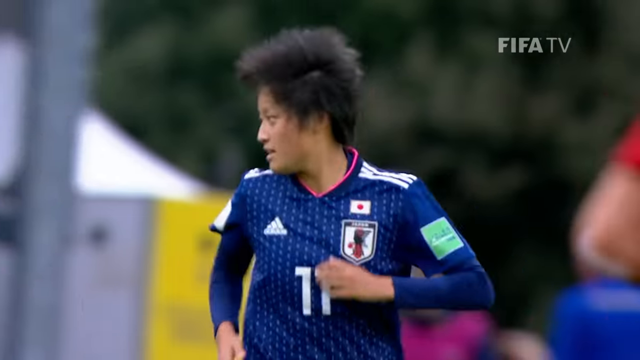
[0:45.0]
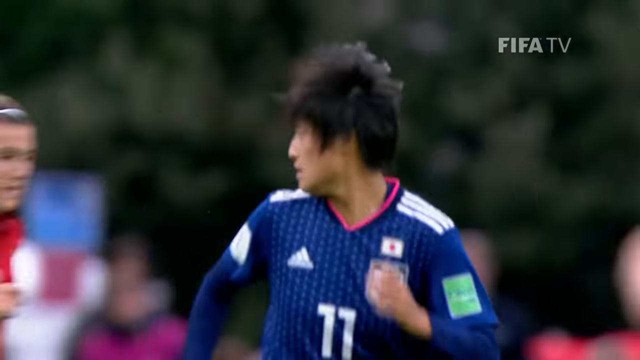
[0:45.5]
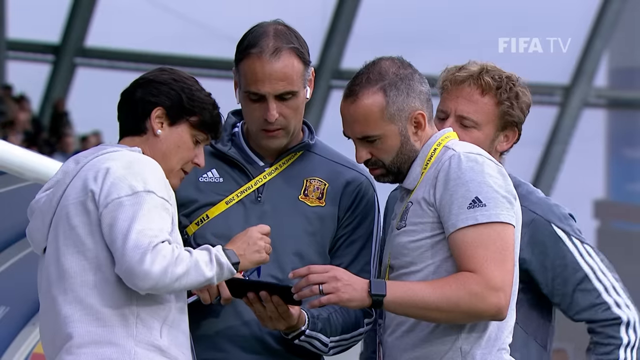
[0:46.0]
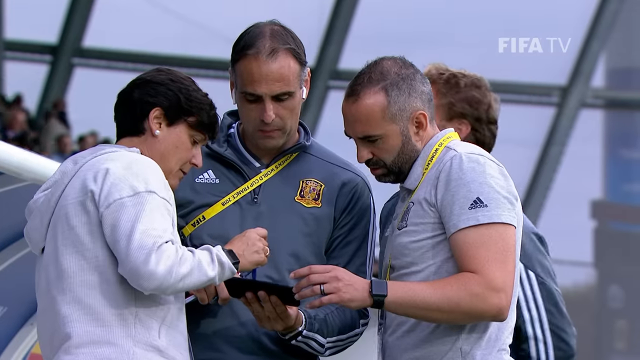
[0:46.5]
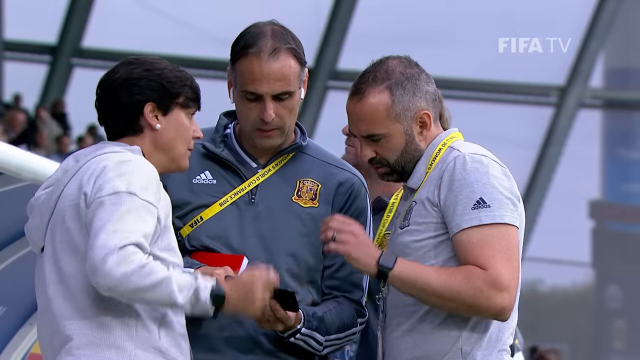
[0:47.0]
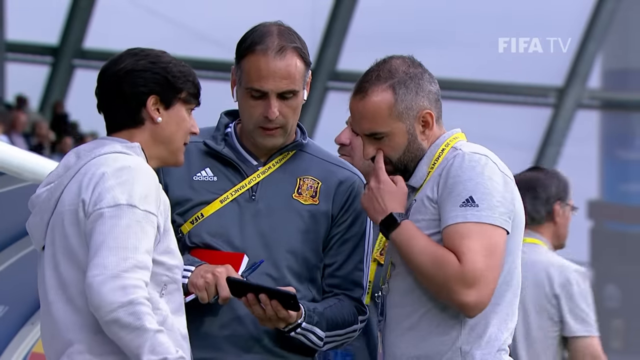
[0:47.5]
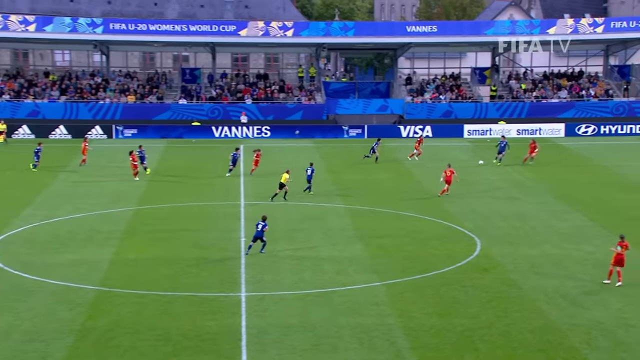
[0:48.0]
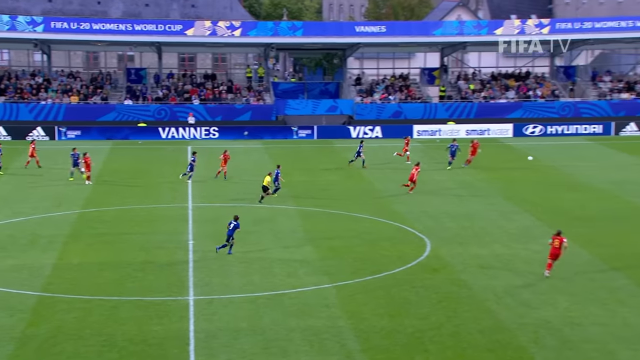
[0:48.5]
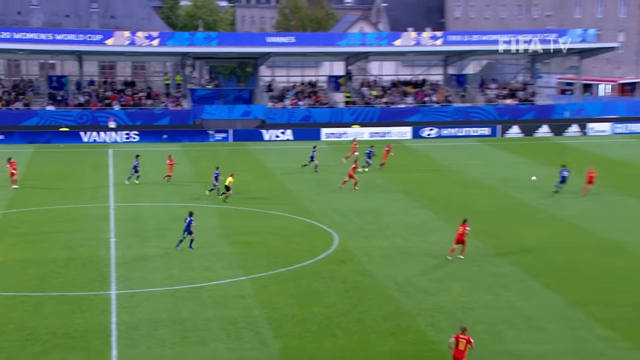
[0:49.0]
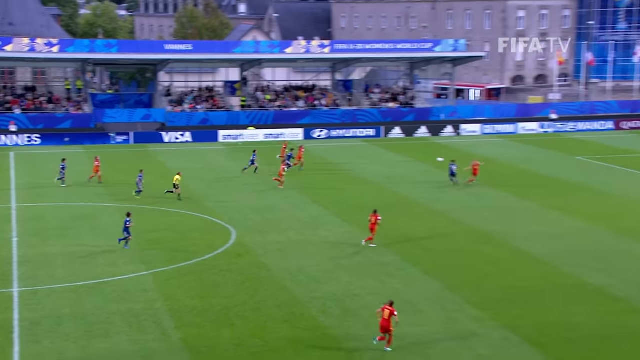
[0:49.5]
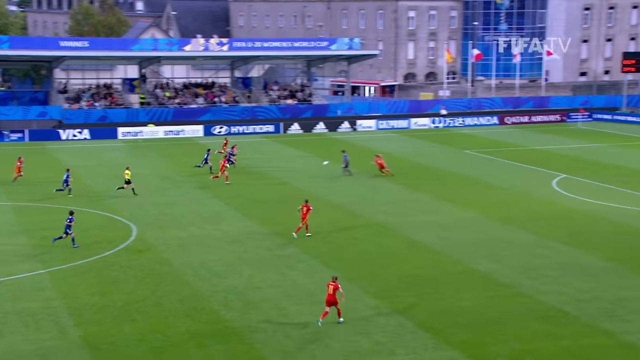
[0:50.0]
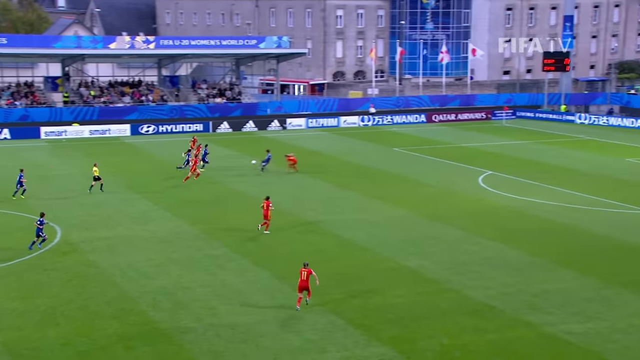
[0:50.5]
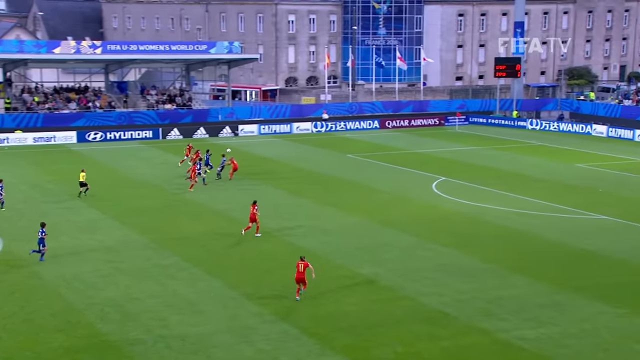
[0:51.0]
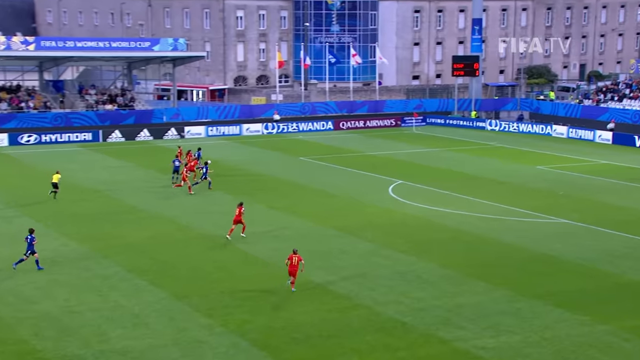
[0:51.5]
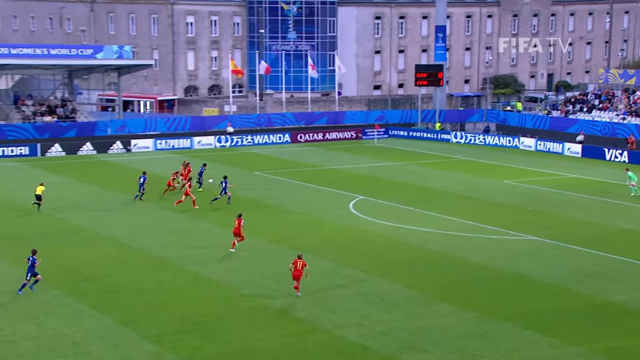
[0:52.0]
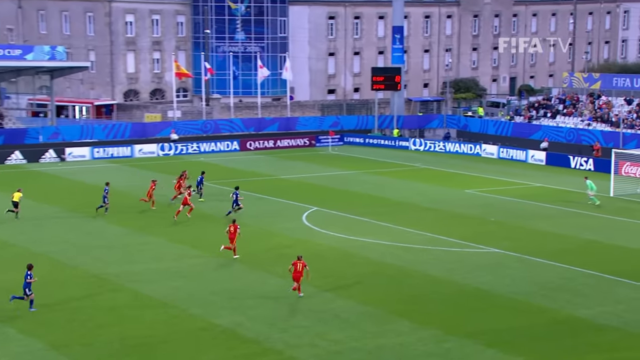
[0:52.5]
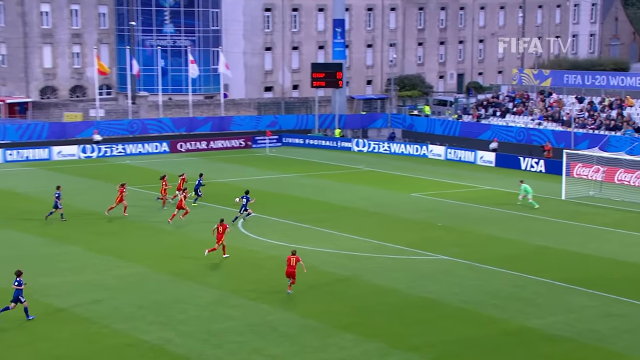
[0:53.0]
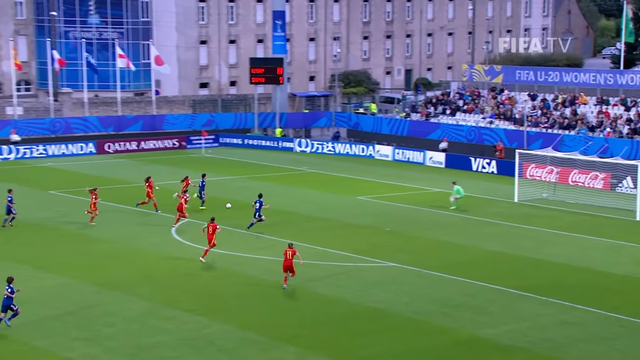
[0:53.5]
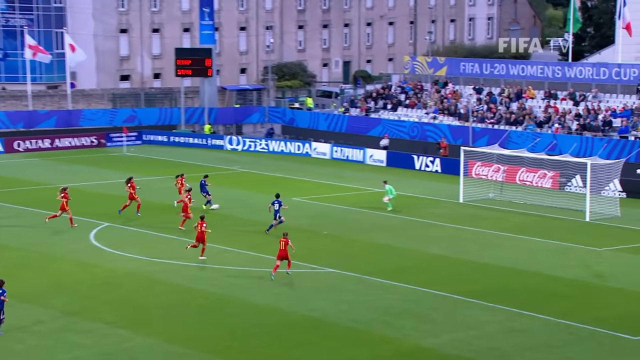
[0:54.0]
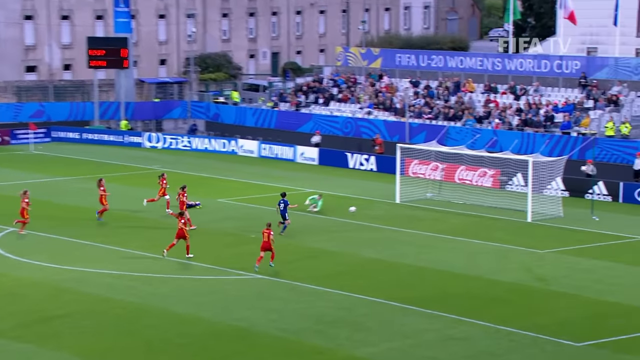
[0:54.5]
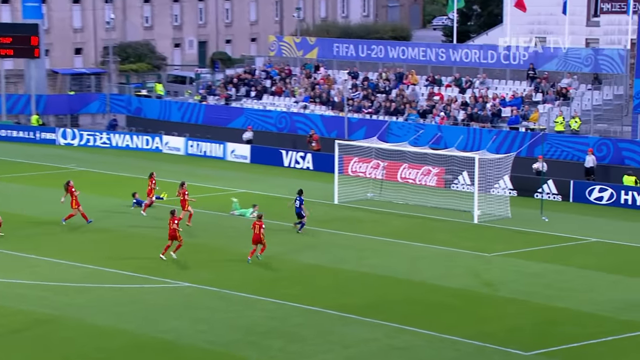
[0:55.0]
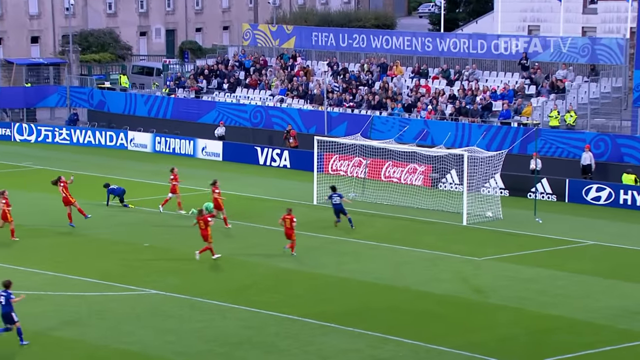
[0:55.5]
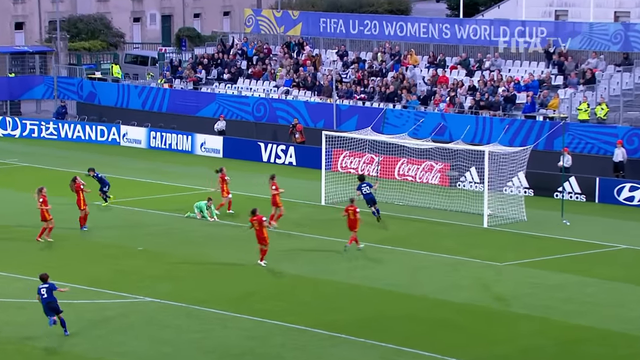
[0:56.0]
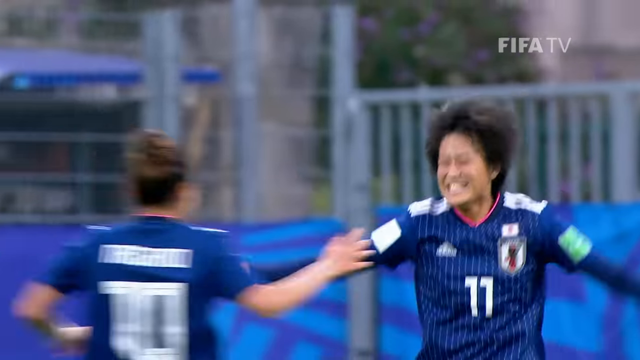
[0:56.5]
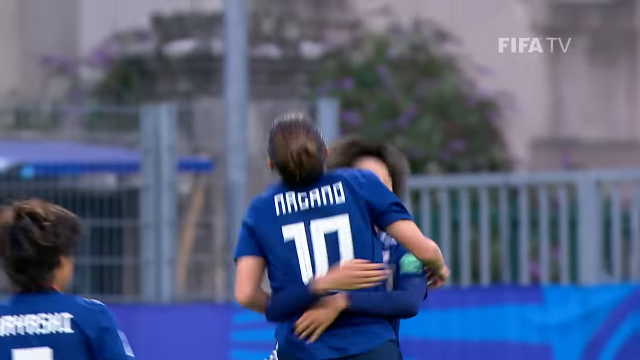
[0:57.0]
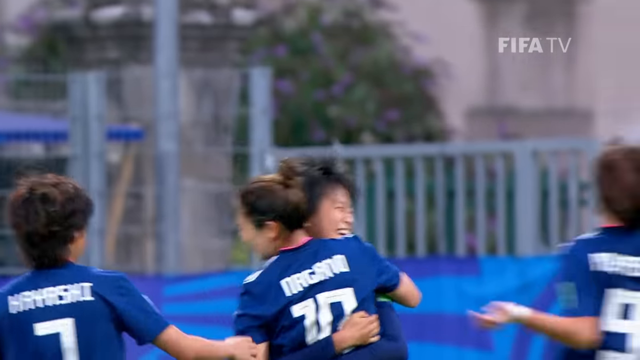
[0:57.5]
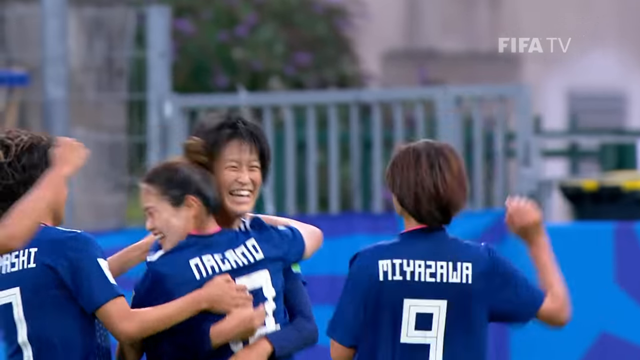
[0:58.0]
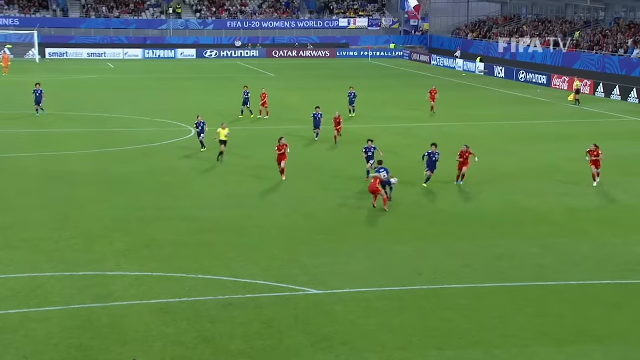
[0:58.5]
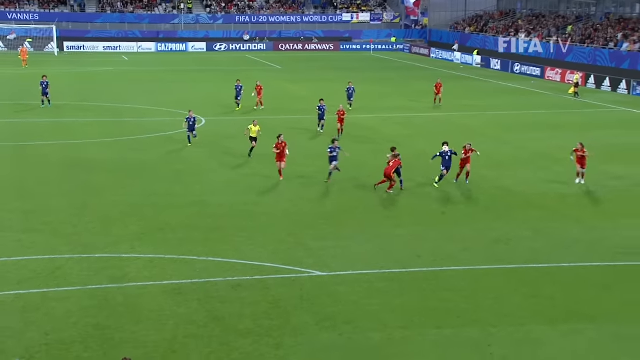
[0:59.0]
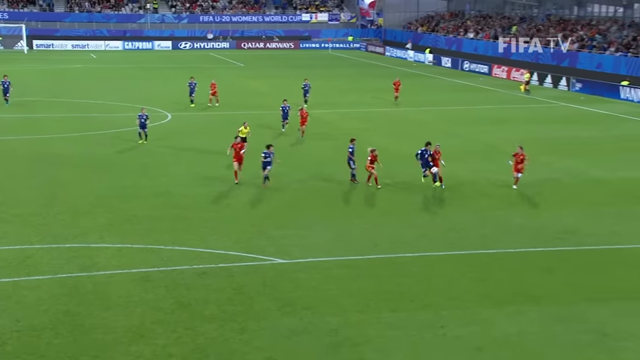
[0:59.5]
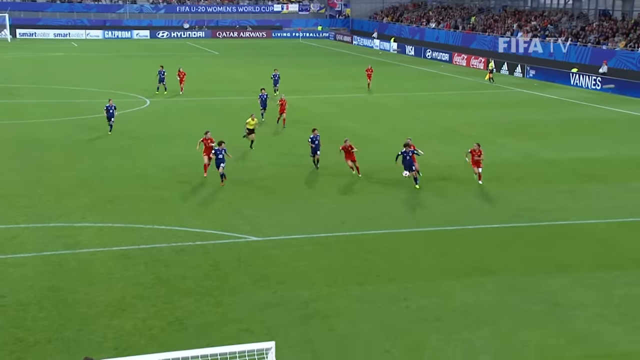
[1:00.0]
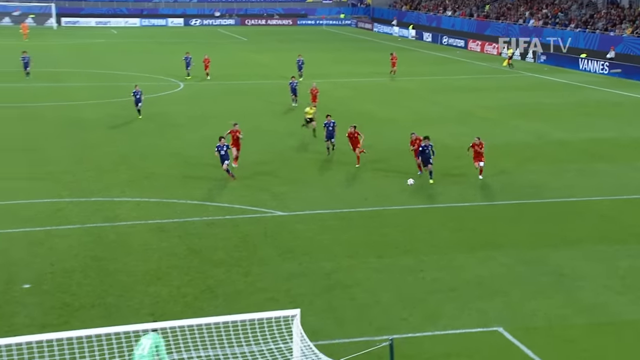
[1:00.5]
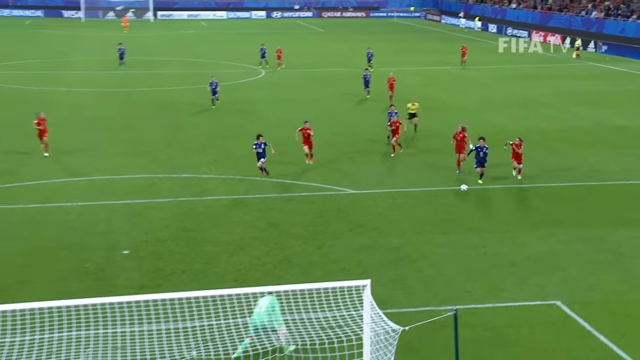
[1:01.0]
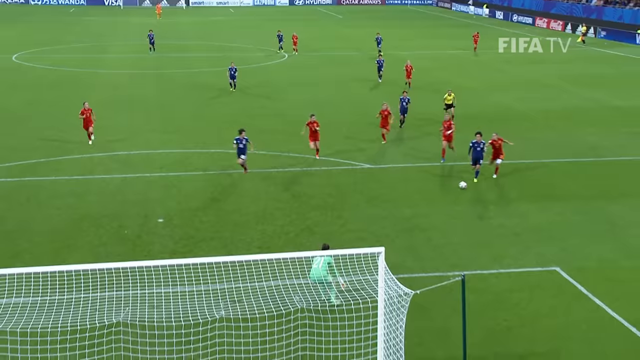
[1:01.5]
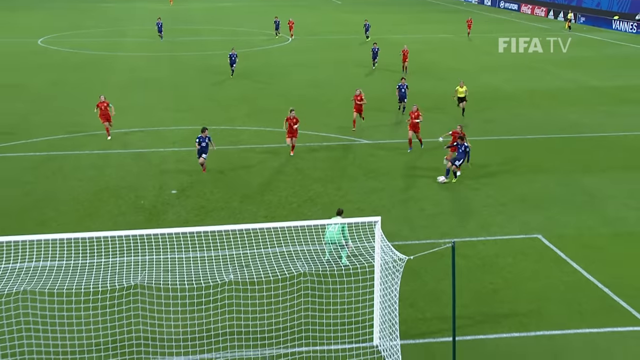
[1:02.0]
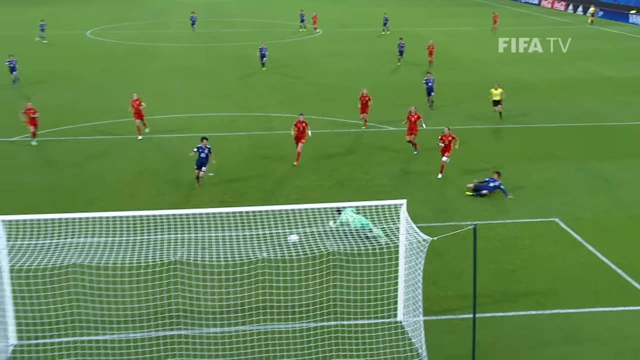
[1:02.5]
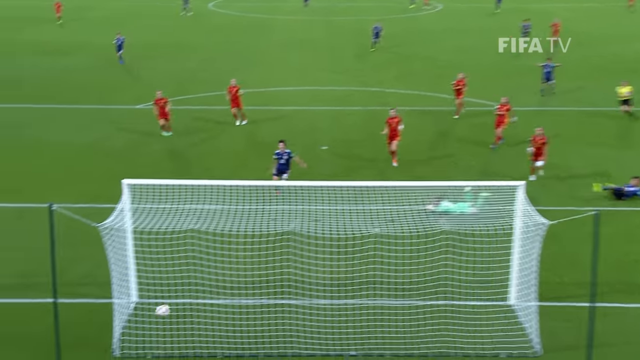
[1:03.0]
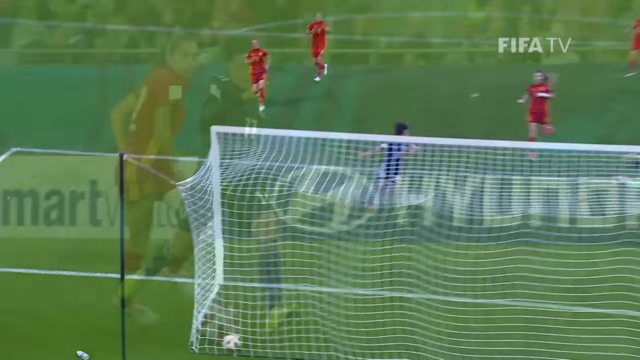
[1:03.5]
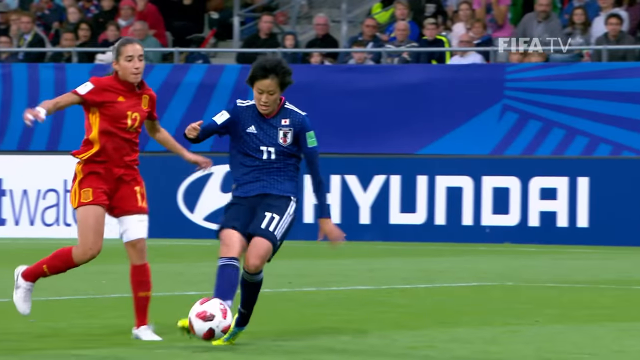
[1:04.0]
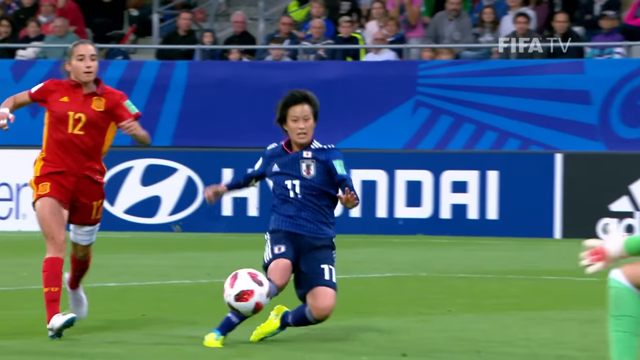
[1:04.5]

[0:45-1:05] The final game of the 2018 FIFA U20 Women's World Cup between Japan in blue uniforms and Spain in red uniforms is shown as a highlight reel of all the scoring and the very close chances, with some shots in slow motion. There are only two cutaways: a man in the stadium at the beginning, and the three coaches pointing over an iPad and deciding how to play. Everything else is action on the field. The stadium looks rather small. Japan wins, scoring three, and at the end the Japanese players jump up and down all together as confetti comes down from the sky.